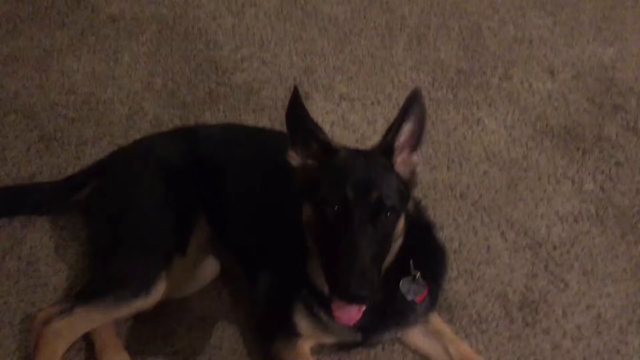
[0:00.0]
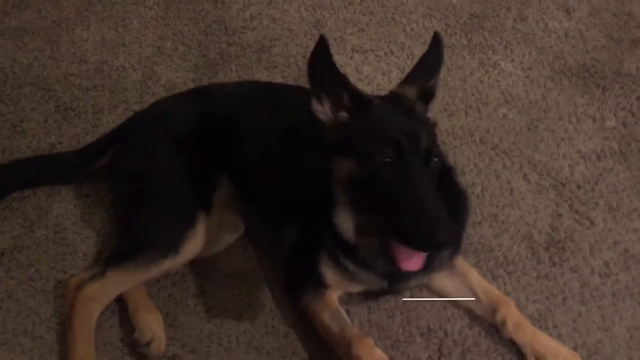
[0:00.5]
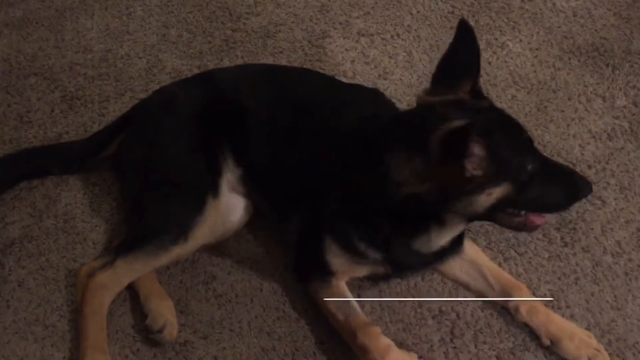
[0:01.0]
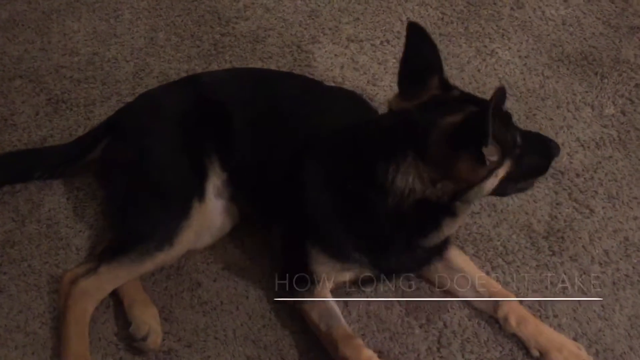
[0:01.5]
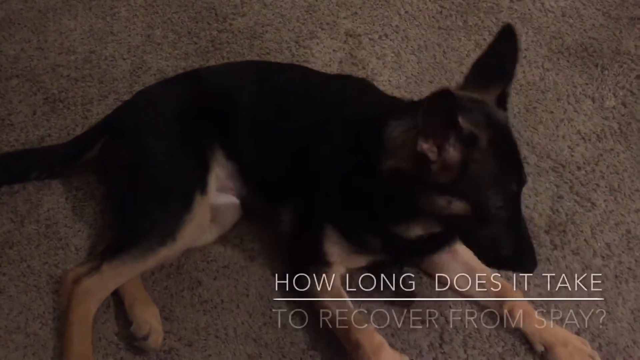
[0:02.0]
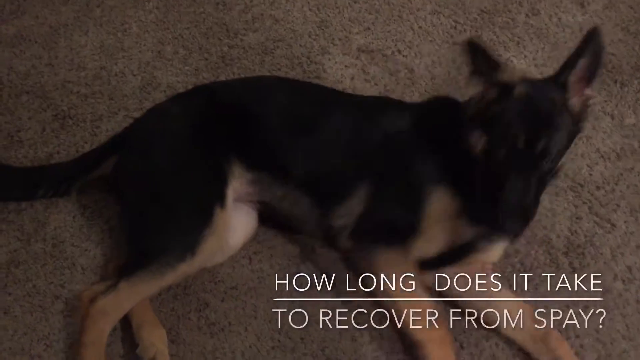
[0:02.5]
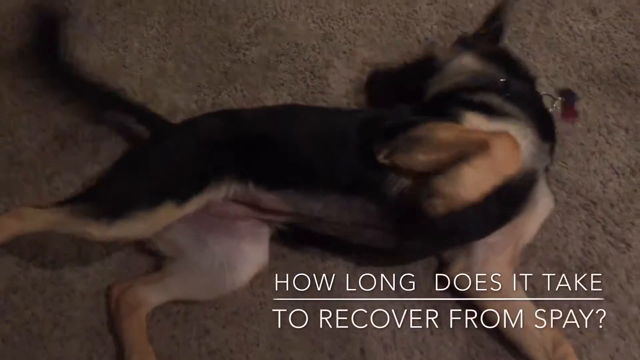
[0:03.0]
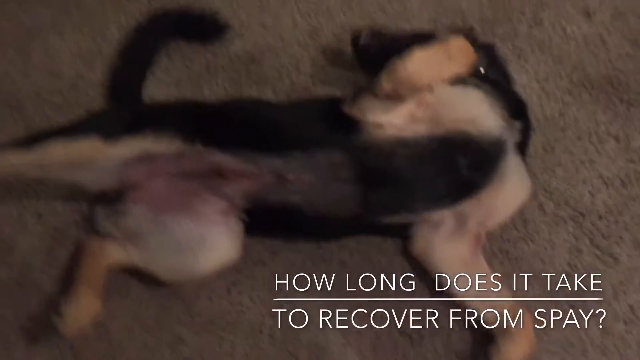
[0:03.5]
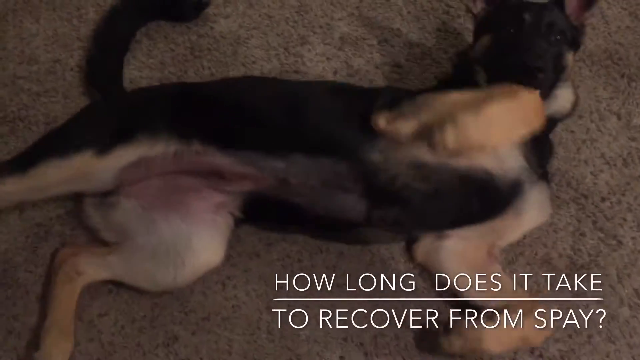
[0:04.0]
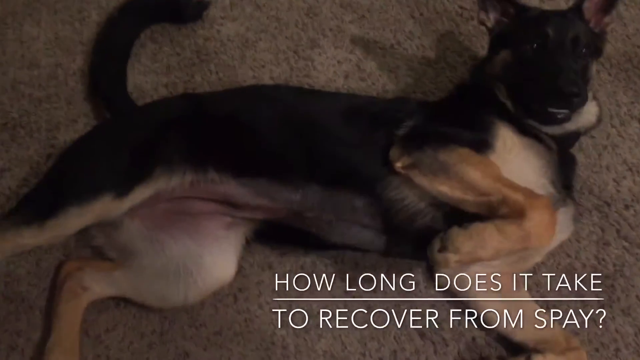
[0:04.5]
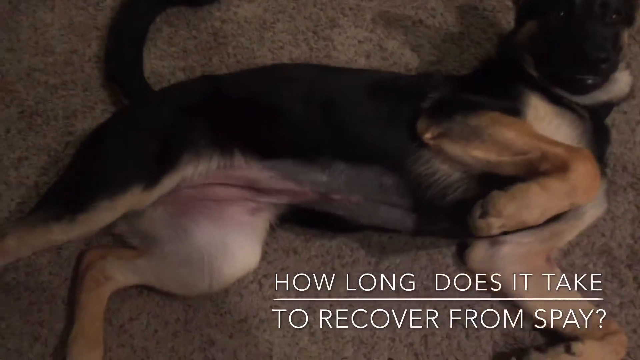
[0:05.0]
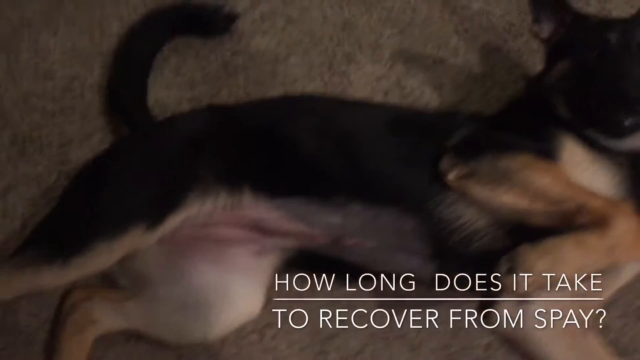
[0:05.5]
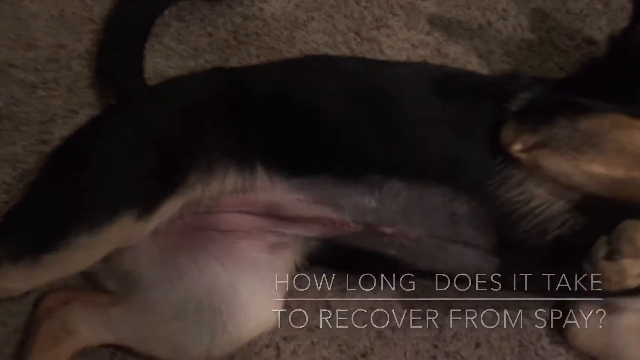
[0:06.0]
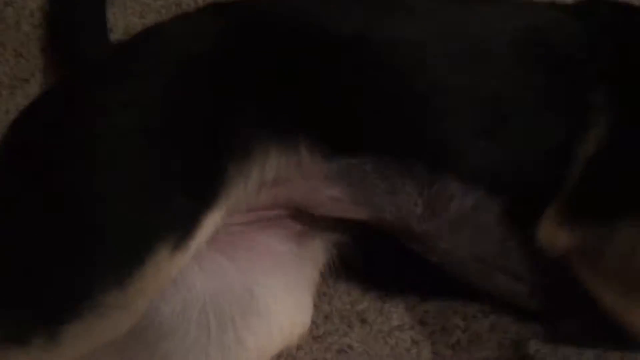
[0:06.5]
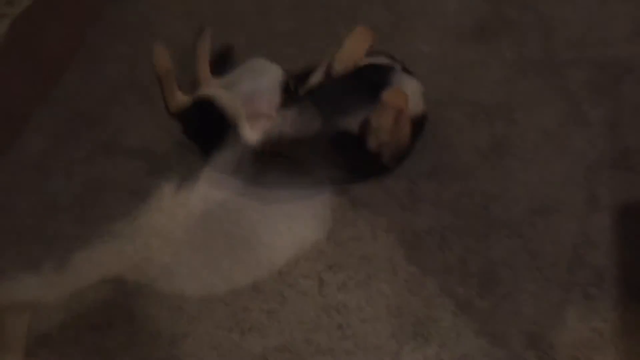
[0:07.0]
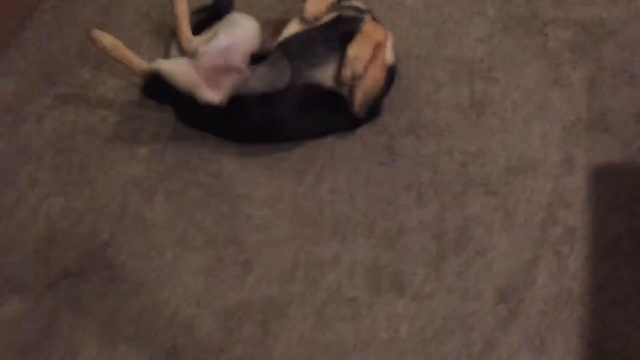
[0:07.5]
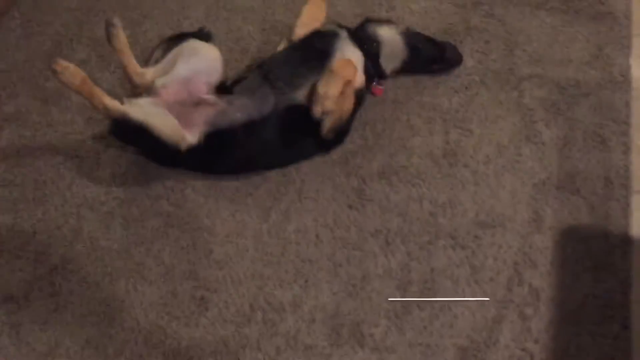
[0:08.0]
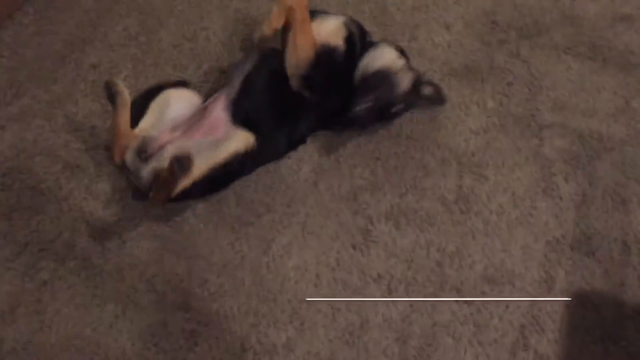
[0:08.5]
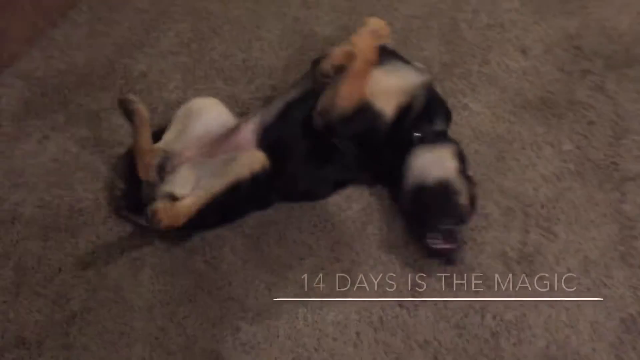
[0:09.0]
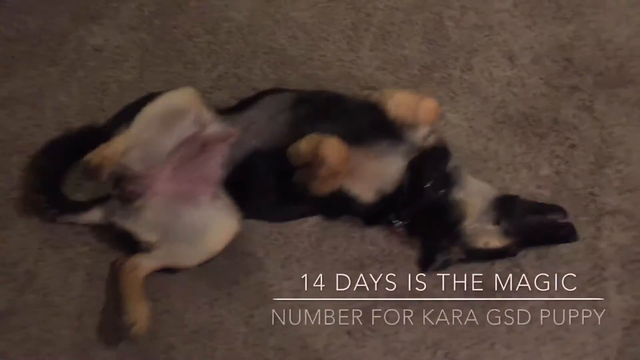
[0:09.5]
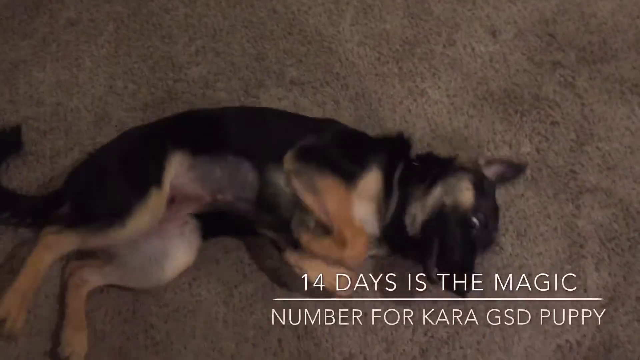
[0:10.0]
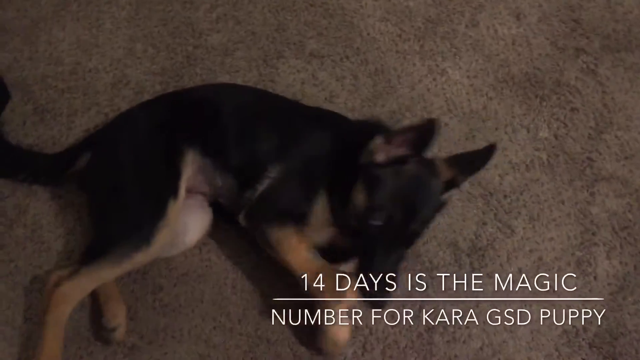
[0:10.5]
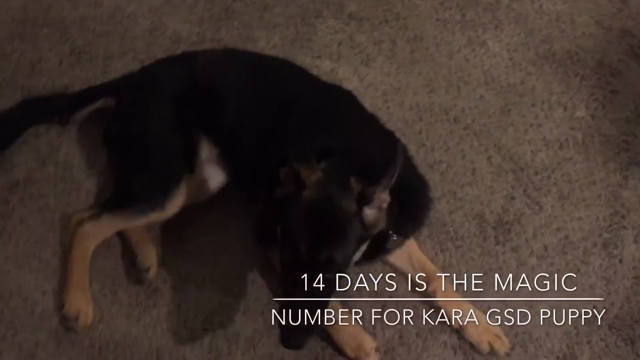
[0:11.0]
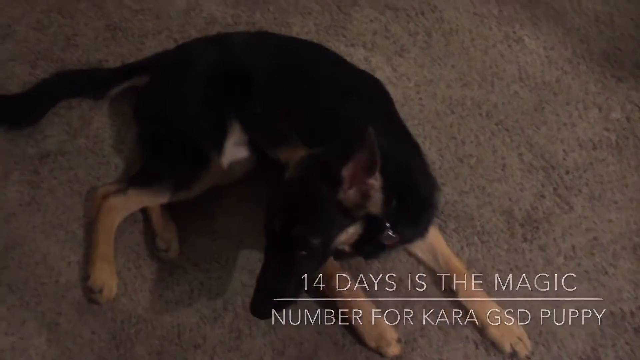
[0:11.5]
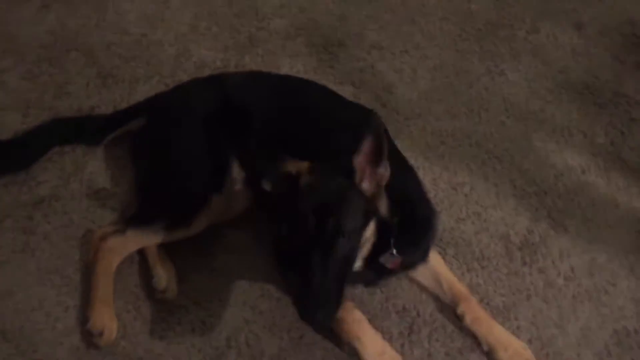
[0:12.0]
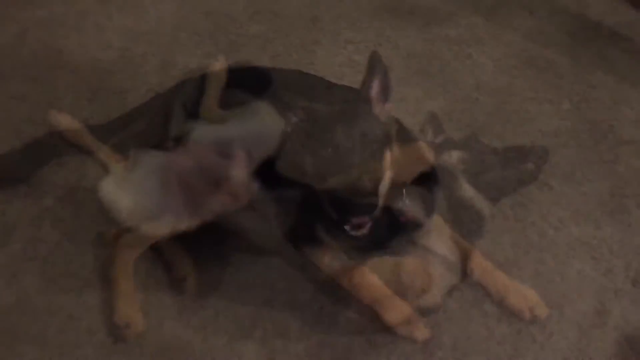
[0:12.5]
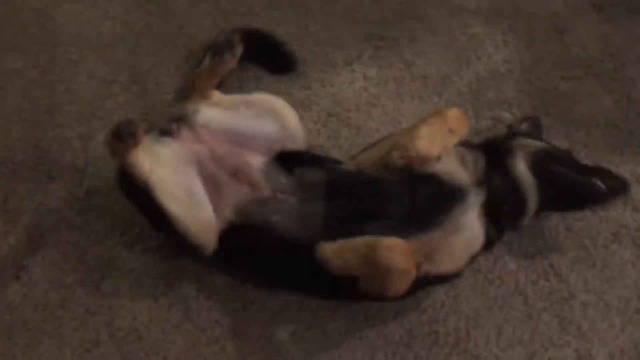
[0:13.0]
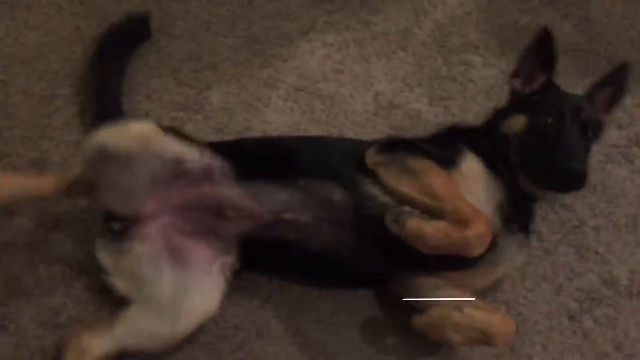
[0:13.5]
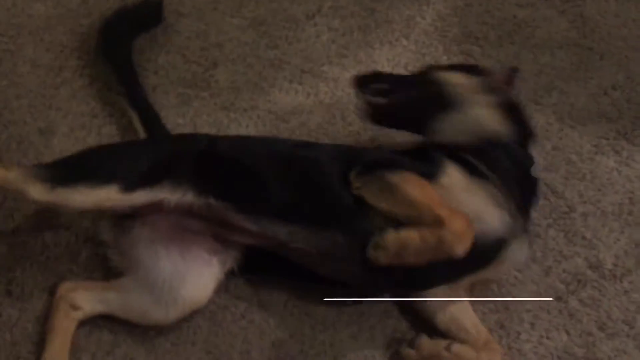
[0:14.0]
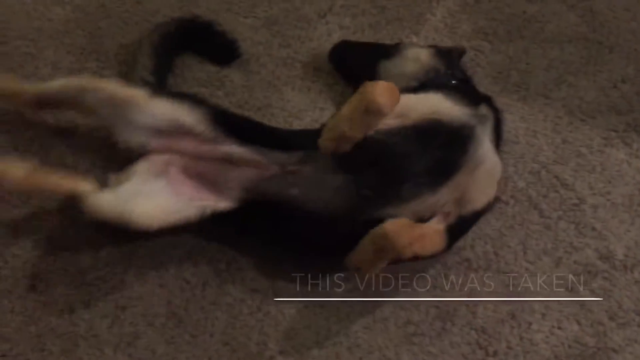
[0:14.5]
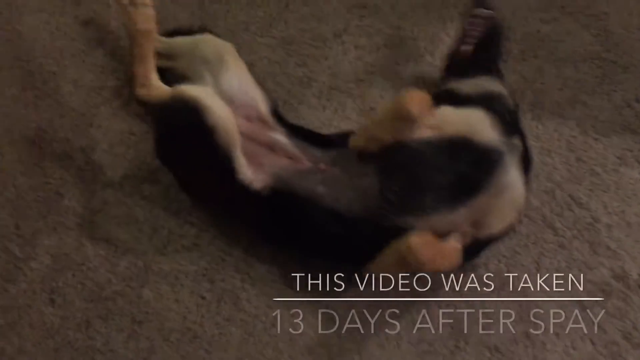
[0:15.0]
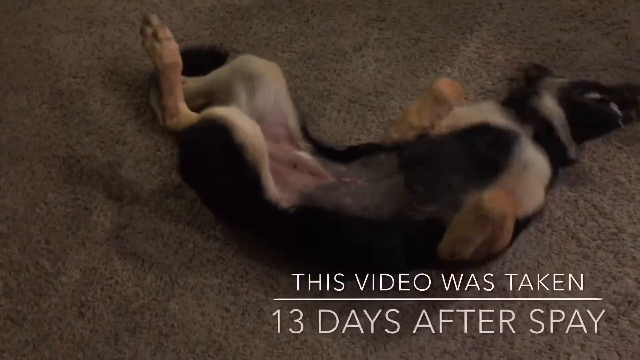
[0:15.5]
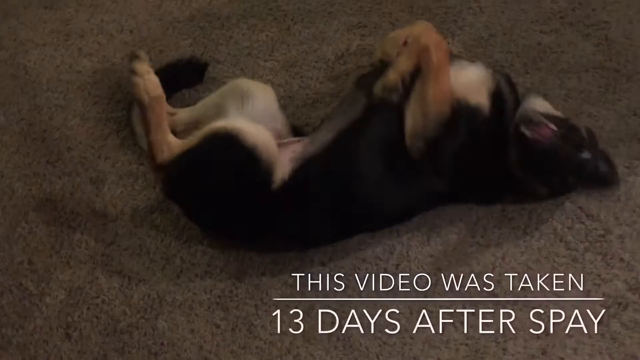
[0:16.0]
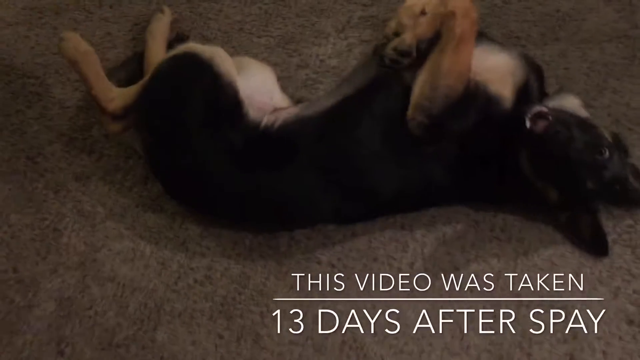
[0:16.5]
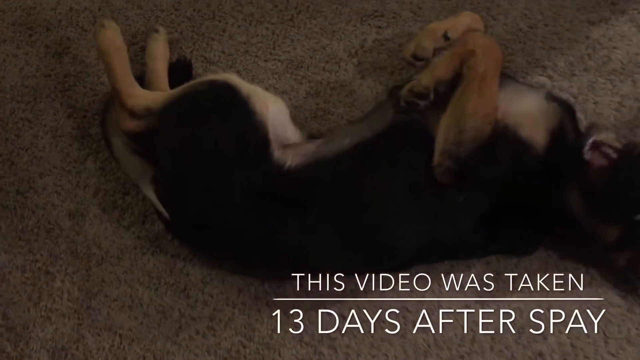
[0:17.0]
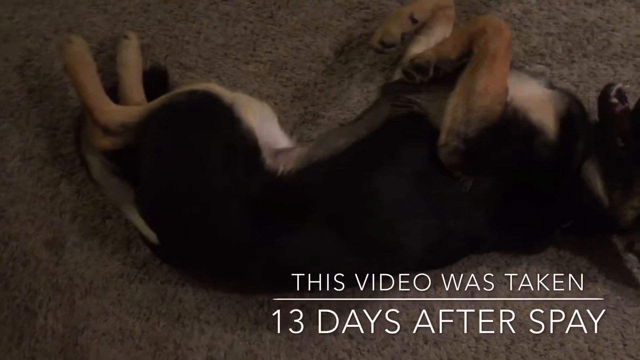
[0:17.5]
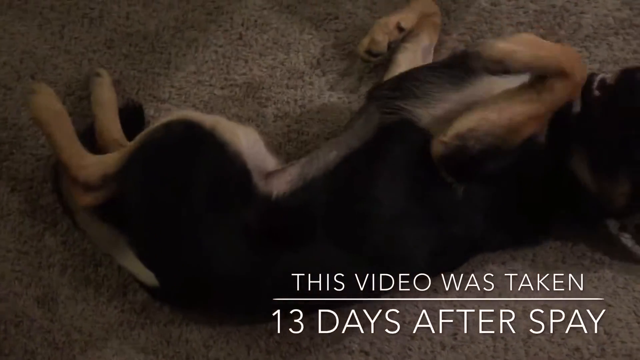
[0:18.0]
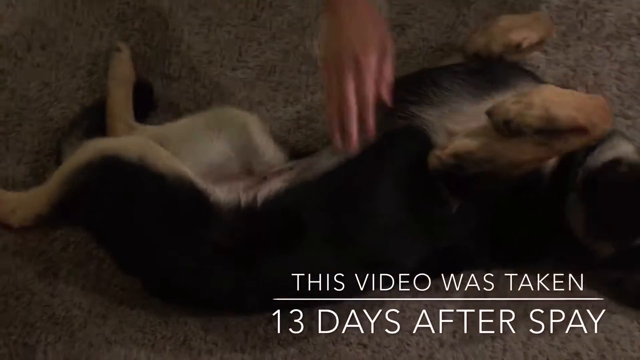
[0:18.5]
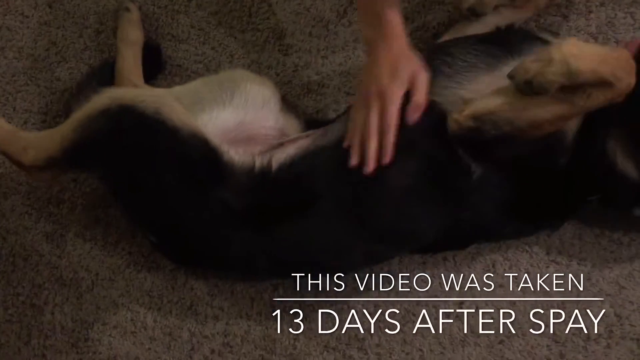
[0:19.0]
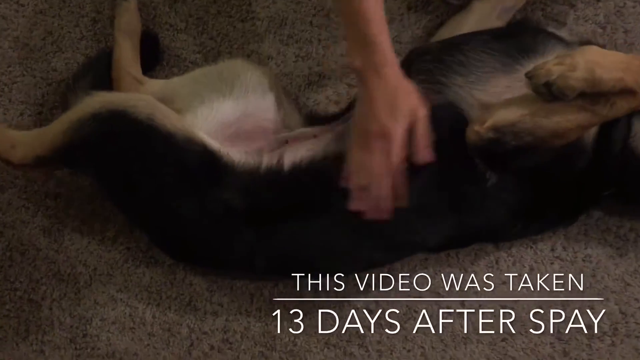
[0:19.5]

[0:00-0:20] A dog lies on a carpet; it might be a police dog. The dog looks toward the camera, then to the left, back to the camera, and then to the right. A white subtitle appears at the bottom right of the screen reading "how long does it take to recover from spay". The camera zooms in between the dog's legs as it continues to lie on its back. Another subtitle appears on screen stating that this was taken 13 days after spay.